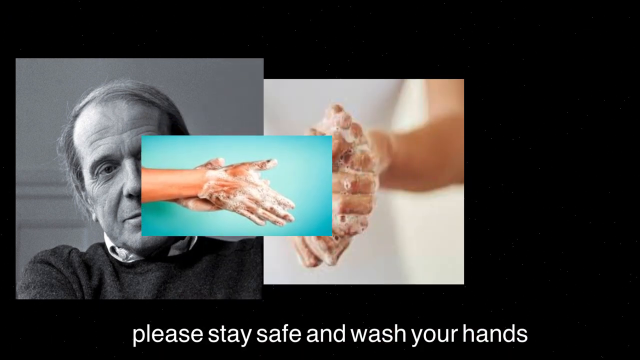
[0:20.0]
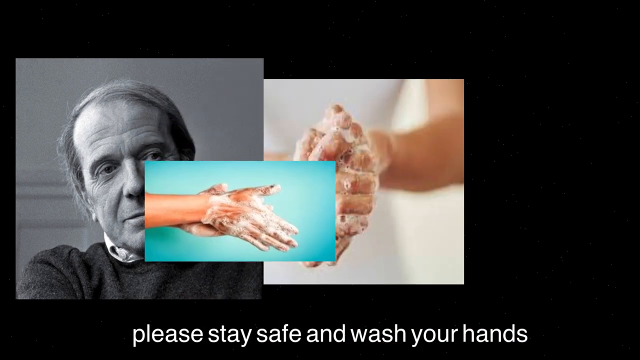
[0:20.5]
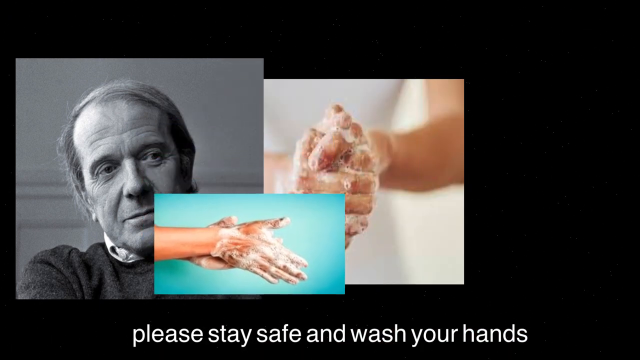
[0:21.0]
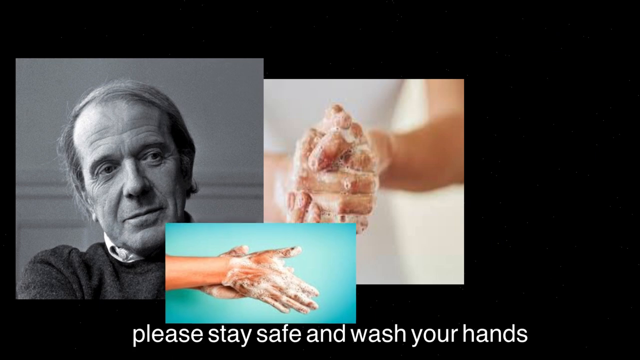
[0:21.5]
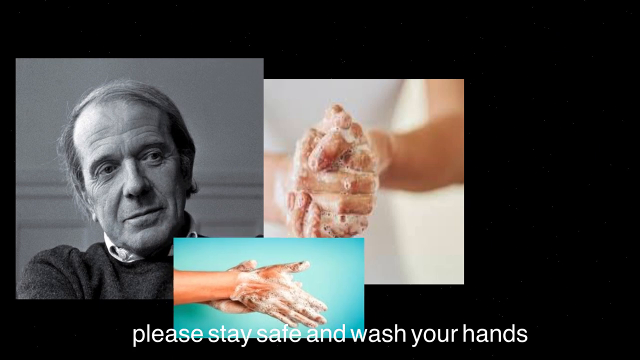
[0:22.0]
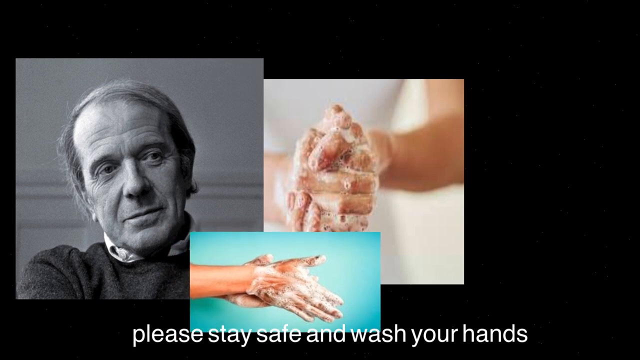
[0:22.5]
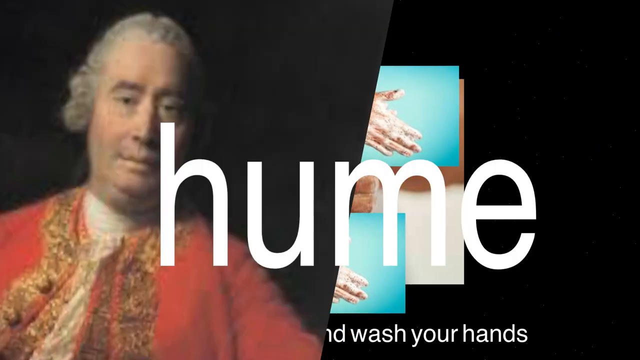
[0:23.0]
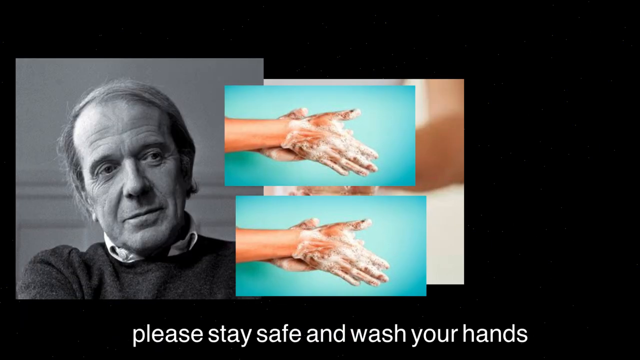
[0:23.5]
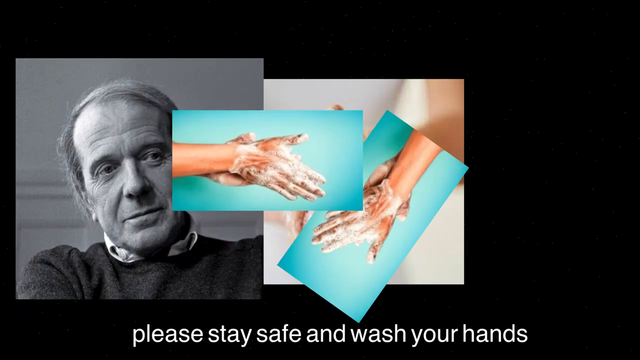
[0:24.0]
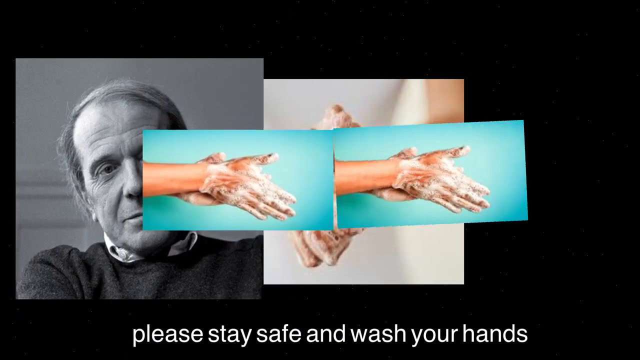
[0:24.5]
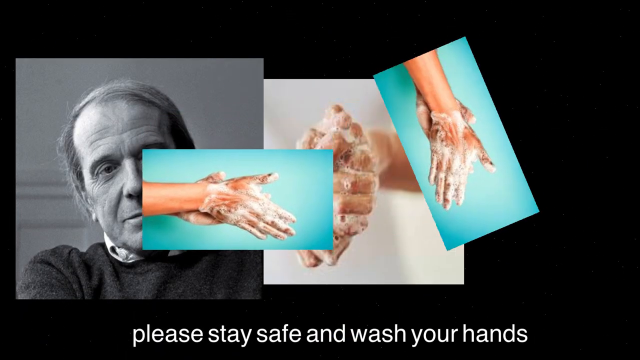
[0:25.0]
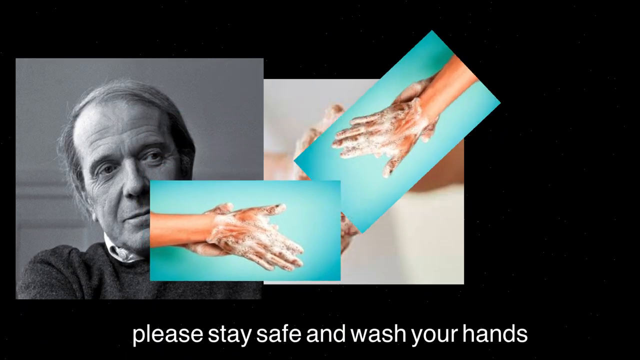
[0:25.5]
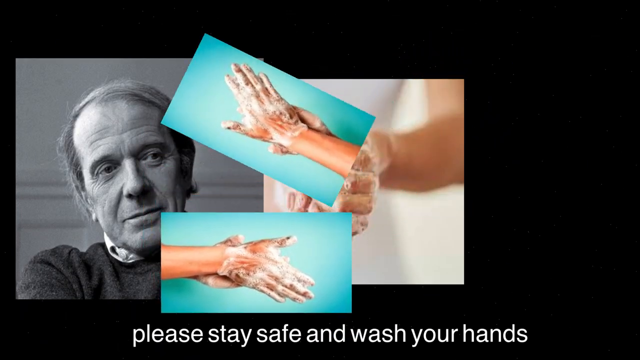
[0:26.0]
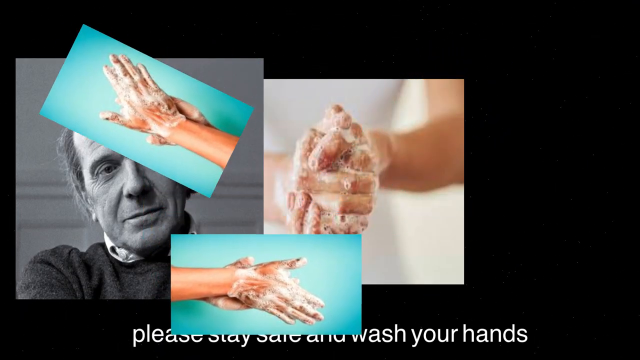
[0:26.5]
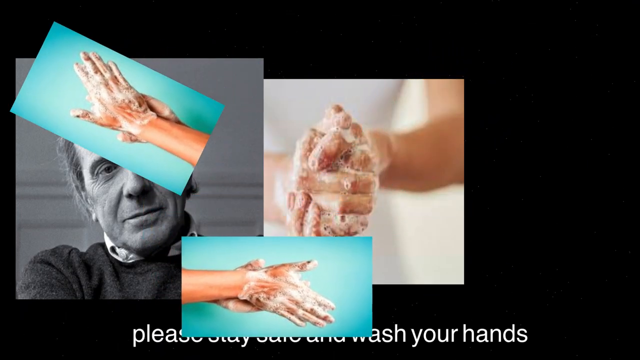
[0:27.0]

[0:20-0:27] The first screen shows the older man in black and white with the colour image of the hands beside it, the same as at the start of the video. A smaller image of hands being washed, with a blue background, flashes up again, sort of in a box that moves around the screen and flips. The image of the person from old times flashes, and the "human" text flashes again. Then there are two blue box images of the hands being washed, ending with just one of them above the original image of the older man and the person in the white shirt washing their hands.